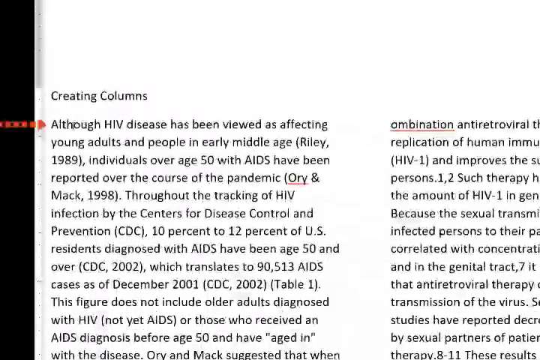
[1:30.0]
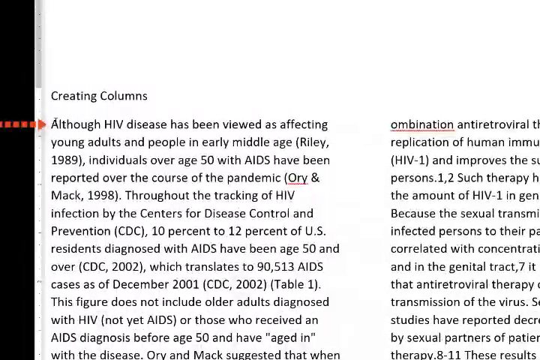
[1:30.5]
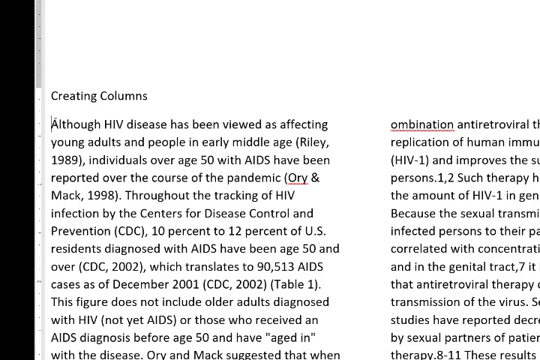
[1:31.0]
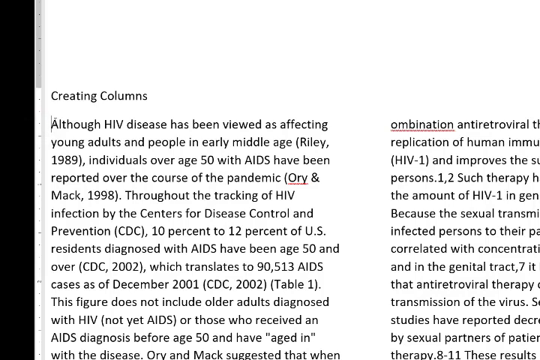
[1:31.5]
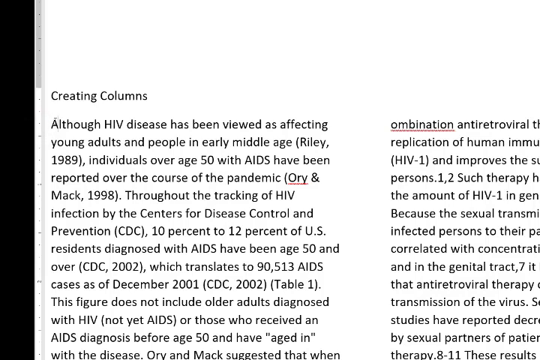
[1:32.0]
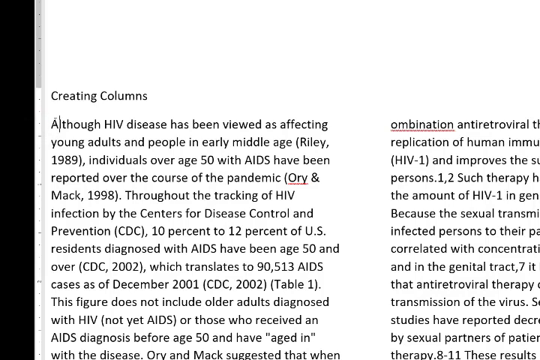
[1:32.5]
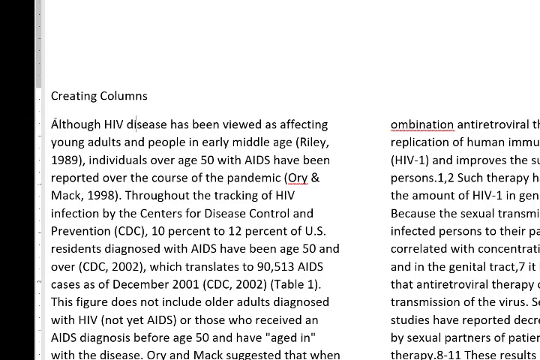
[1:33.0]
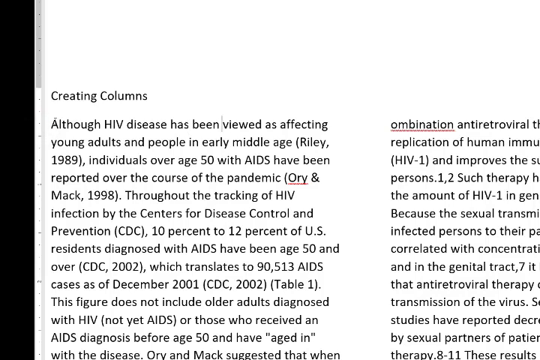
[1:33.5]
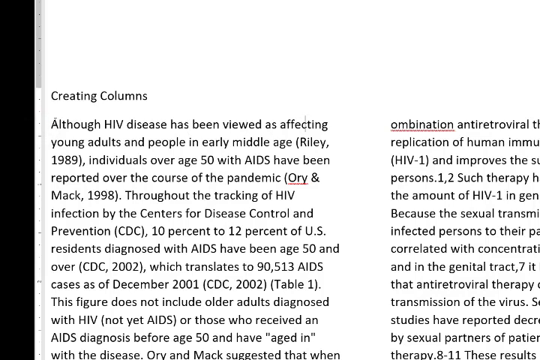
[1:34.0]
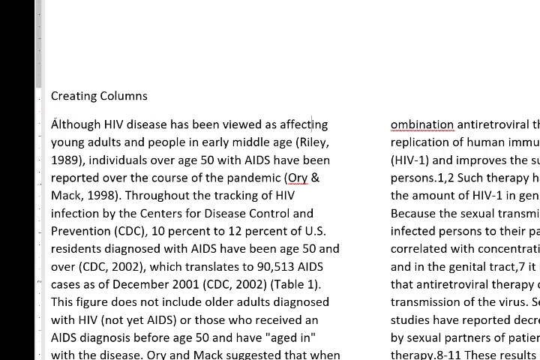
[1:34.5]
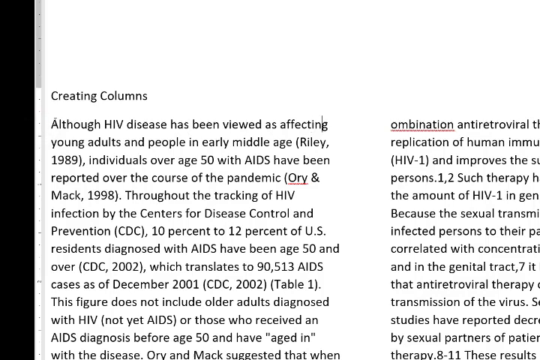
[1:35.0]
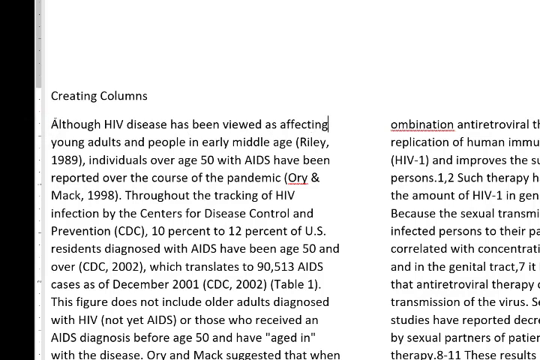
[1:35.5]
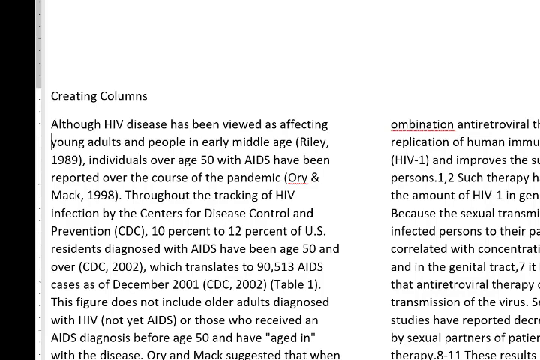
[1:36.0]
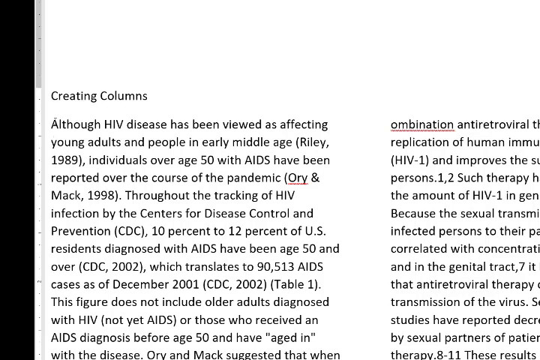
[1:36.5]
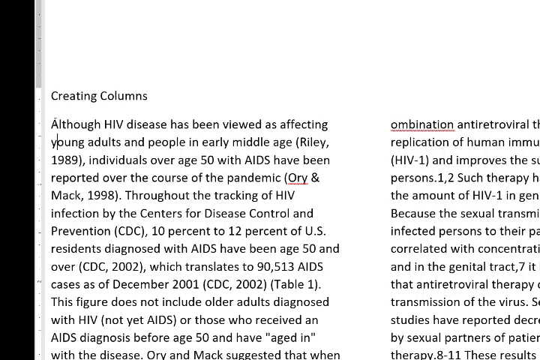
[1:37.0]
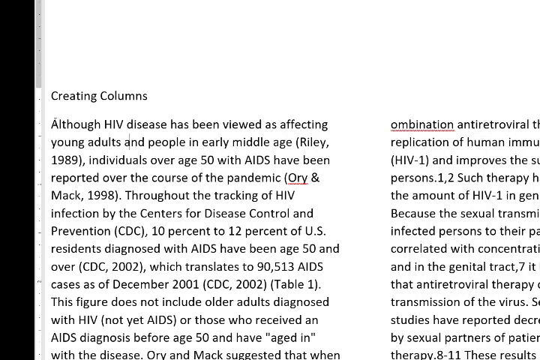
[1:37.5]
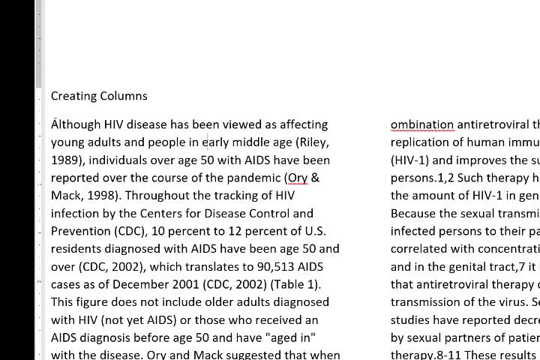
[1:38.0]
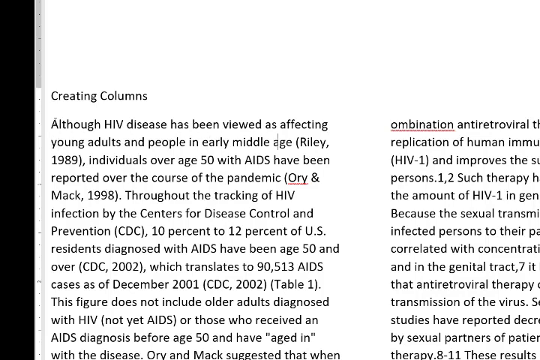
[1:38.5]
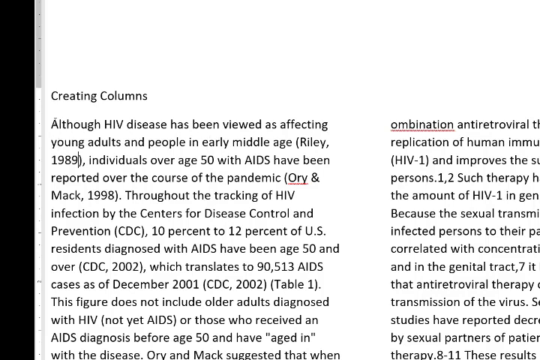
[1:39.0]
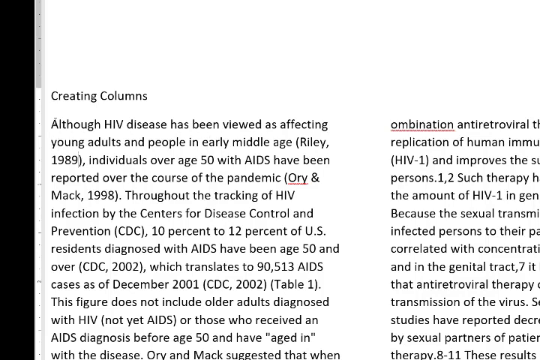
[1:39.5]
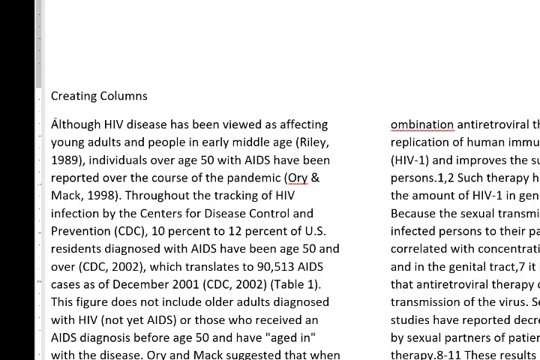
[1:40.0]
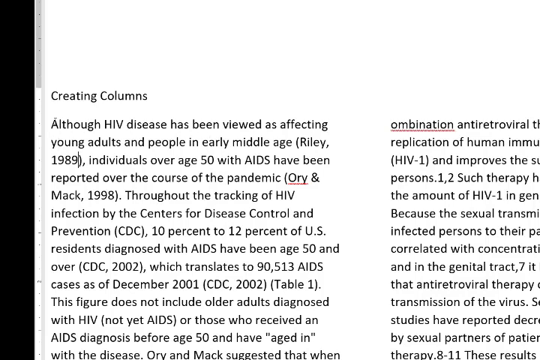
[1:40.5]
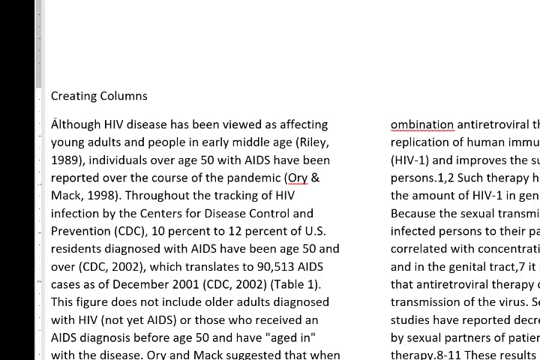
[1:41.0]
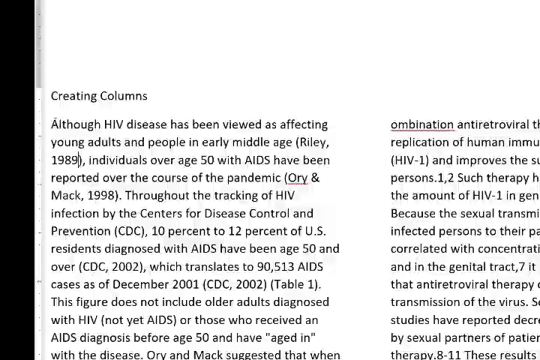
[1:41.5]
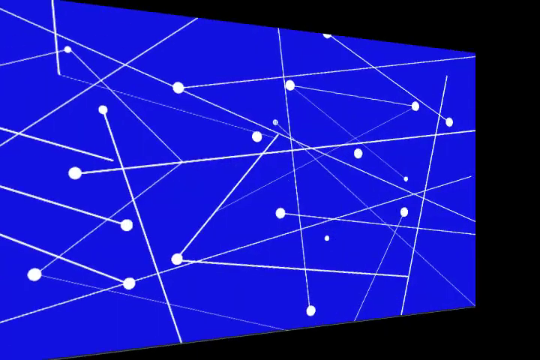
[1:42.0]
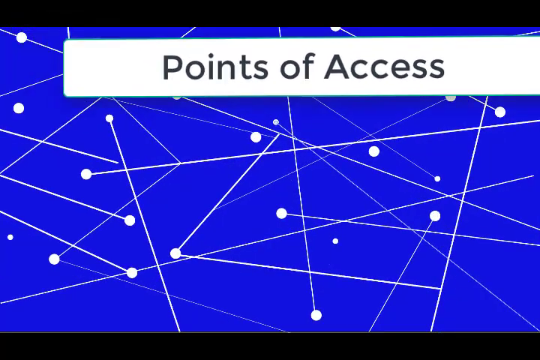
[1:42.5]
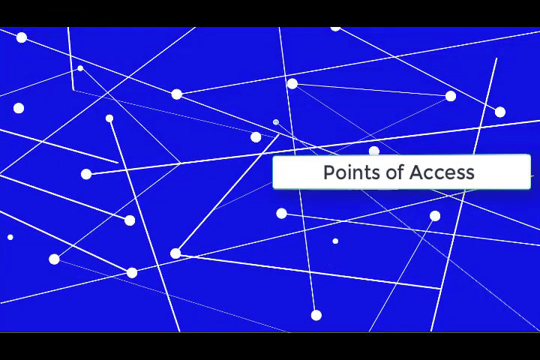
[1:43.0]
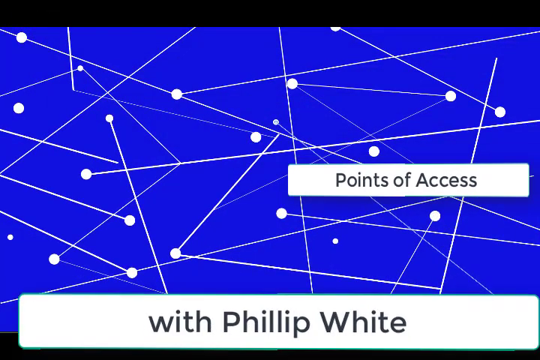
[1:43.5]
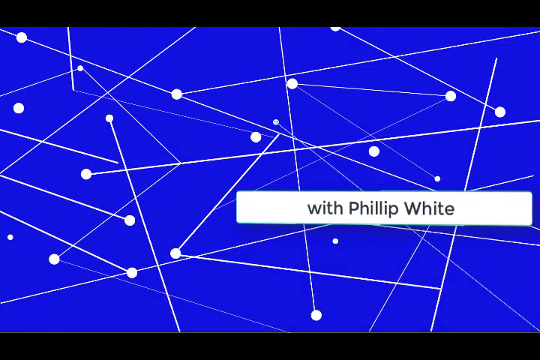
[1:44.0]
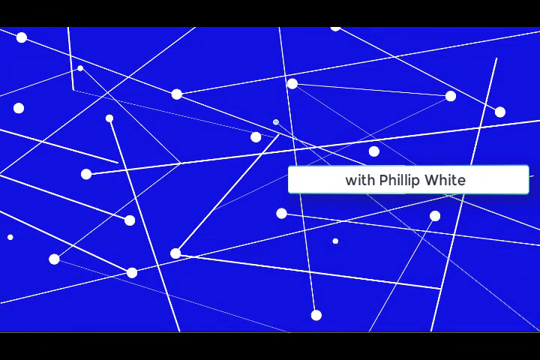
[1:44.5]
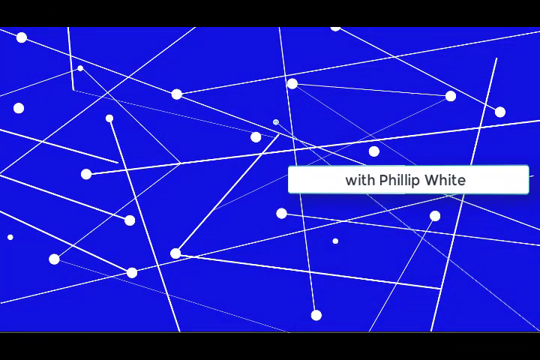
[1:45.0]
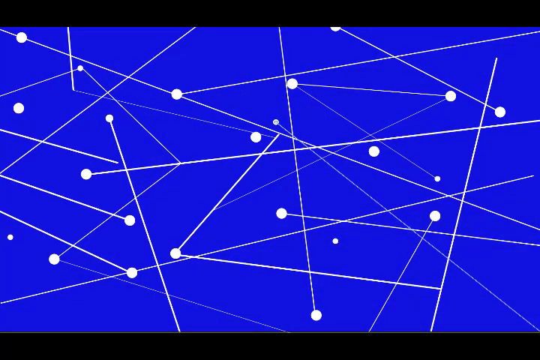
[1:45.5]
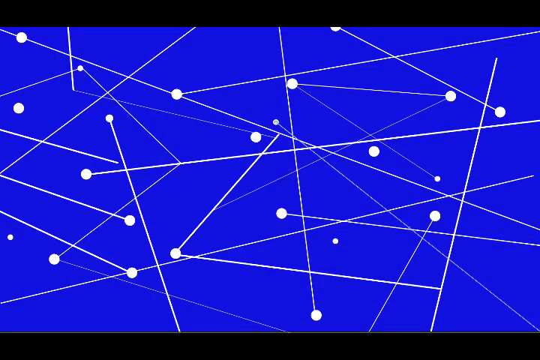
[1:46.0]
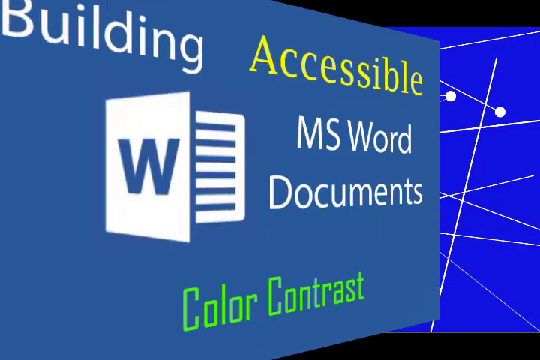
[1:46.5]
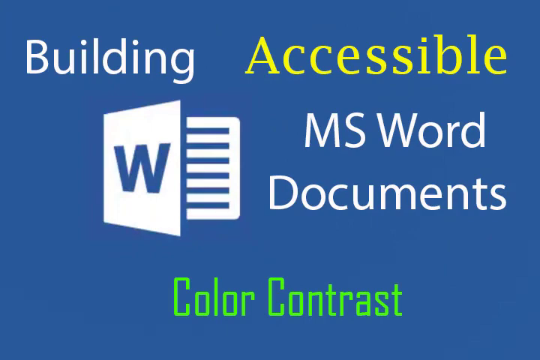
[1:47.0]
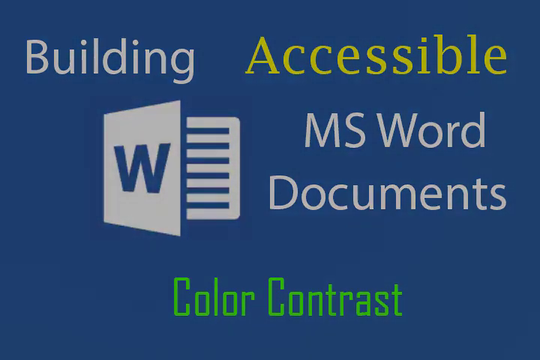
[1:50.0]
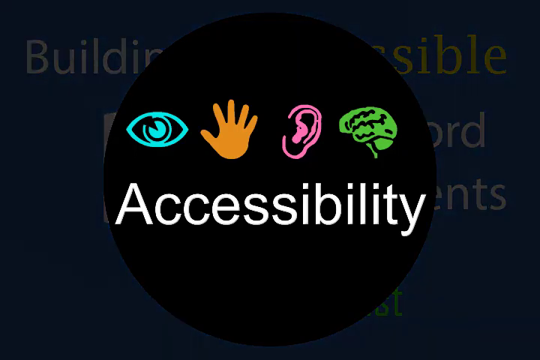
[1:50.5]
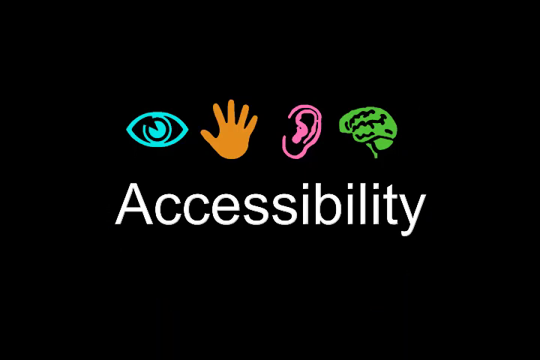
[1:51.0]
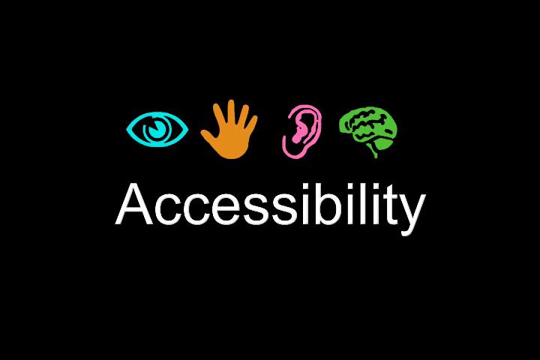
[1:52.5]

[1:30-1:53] Two columns are visible, zoomed in a bit so the header is no longer visible, and the black bar on the left side is more pronounced. The top of the column says "created columns". A dotted red arrow points at the first line of the actual text, which begins "although HIV disease", and the text has been broken into two columns. In the right-hand column a word is underlined by the spellcheck, "ombination", which should have been "combination"; there are some other spellcheck errors. The red arrow disappears and the cursor begins to move across the top line; this time, when it reaches the end of the line, it drops to the next line within its own column rather than moving across columns, and it continues down. After a flip transition, a white box reading "points of access" spans most of the top of the screen, with black letterboxes at the top and bottom. A blue field with a gradient at the bottom takes up most of the screen, with jagged white lines at various angles that have dots at the ends, either where they end or where they turn. The "points of access" sign shrinks down and moves to the middle of the screen. A white box with black text saying "with fill of white" scrolls up from the bottom of the screen, swoops in to the middle and replaces "points of access", taking up the same space, then disappears. After a flip transition, the blue field shows "building accessible MS Word documents" with the large clipart icon of MS Word as an open book, and beneath it "color contrast" in green in the blockier, more primitive-looking font. This holds for a couple of seconds, then fades out to a black screen. Four clipart icons run across the middle: a blue eye, a yellow hand with splayed fingers, a purple ear facing the camera, and a green brain. Beneath them is the white word "accessibility", which stays on screen.